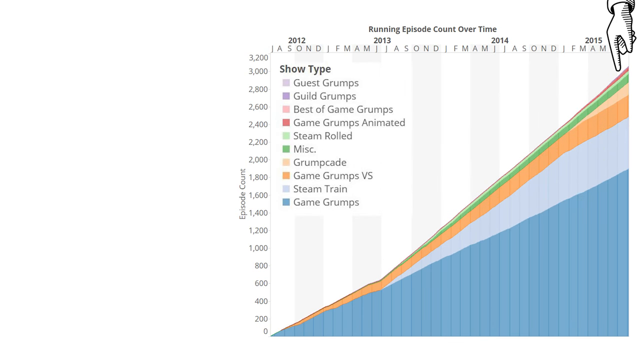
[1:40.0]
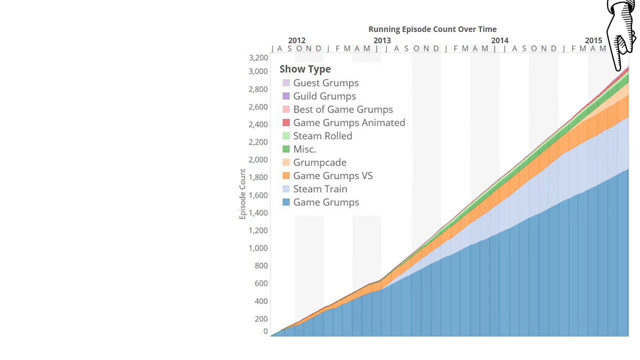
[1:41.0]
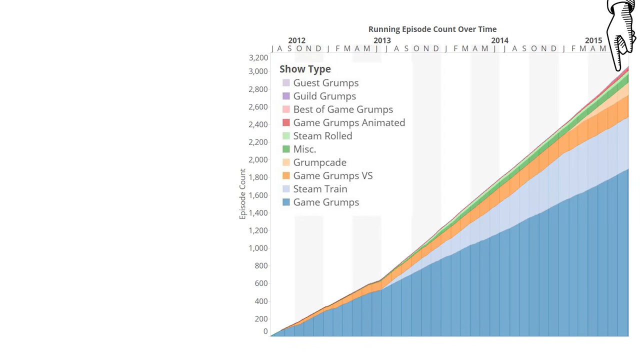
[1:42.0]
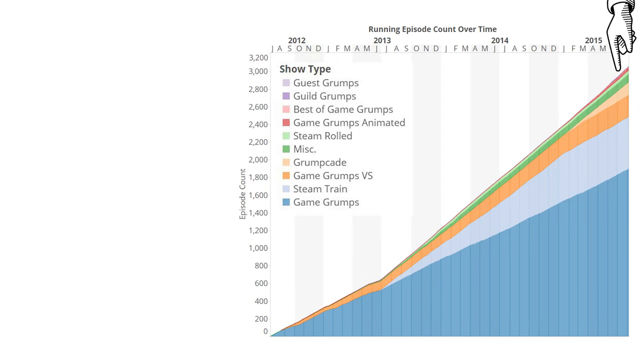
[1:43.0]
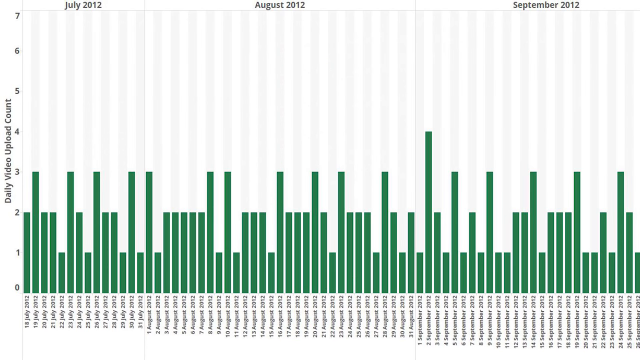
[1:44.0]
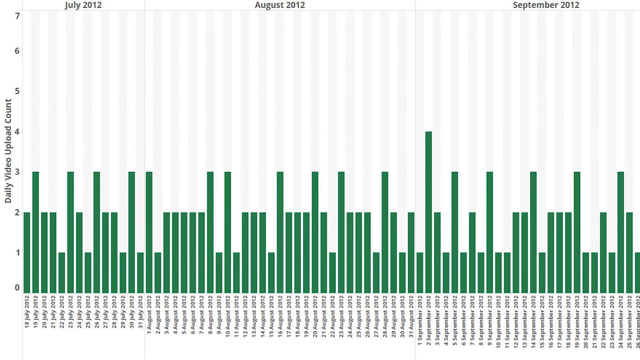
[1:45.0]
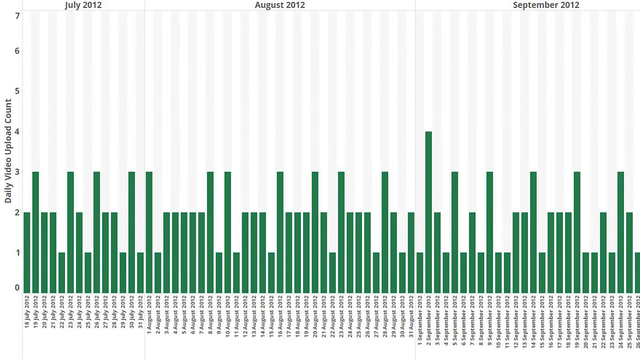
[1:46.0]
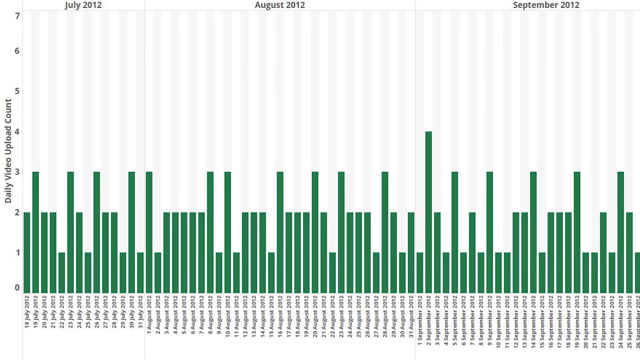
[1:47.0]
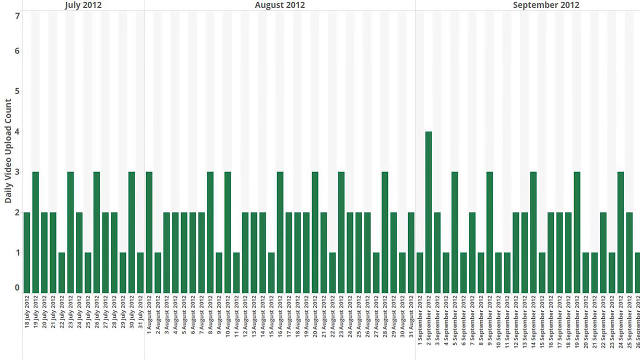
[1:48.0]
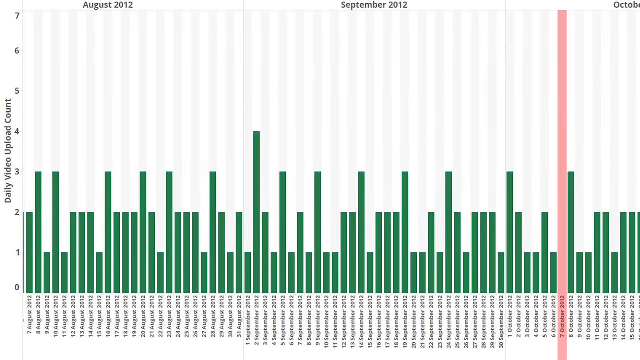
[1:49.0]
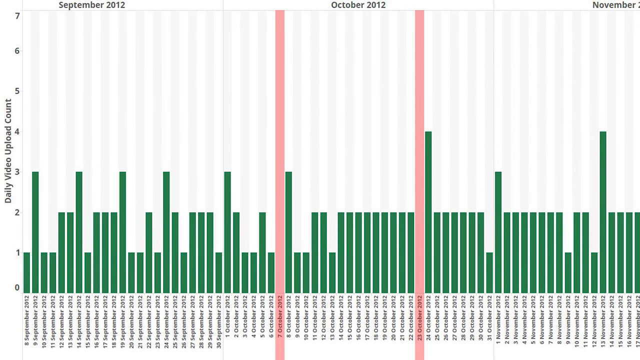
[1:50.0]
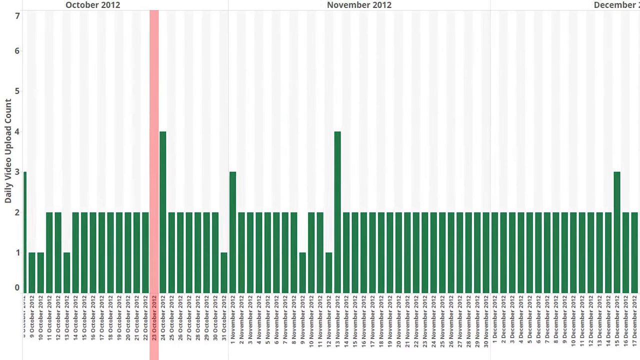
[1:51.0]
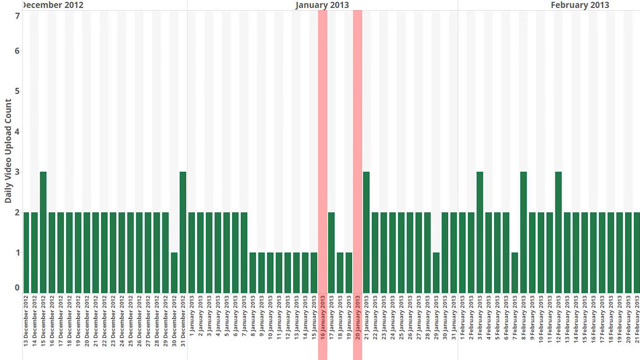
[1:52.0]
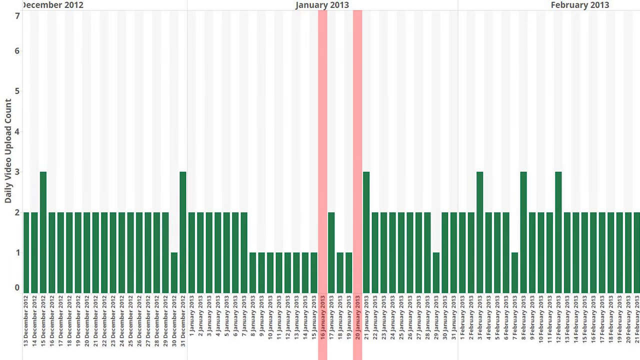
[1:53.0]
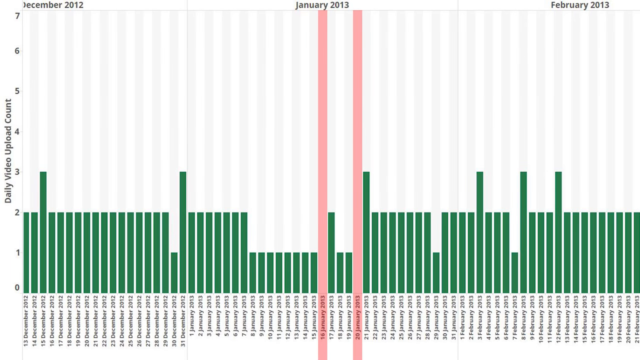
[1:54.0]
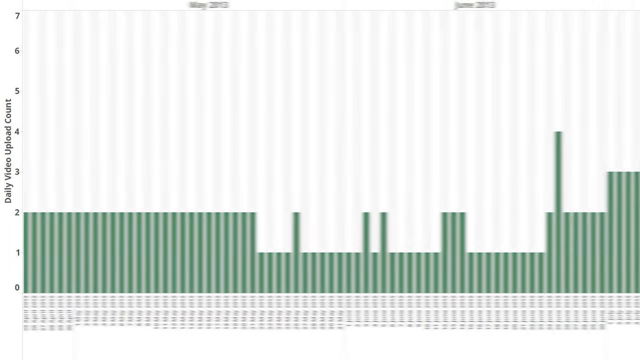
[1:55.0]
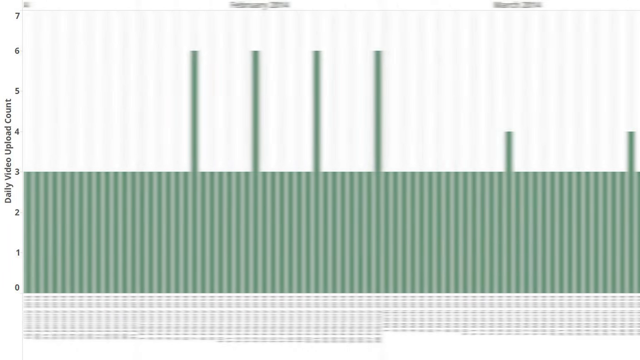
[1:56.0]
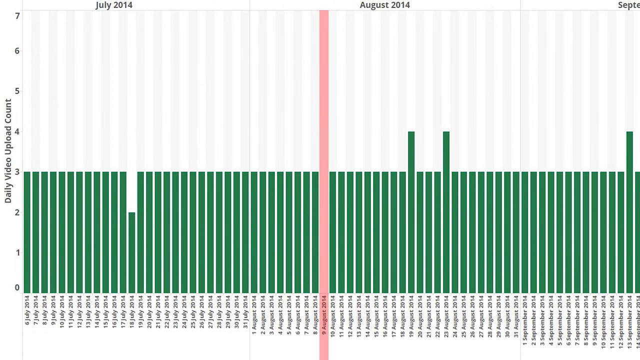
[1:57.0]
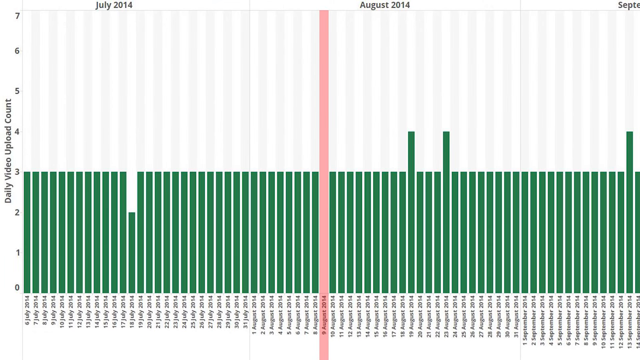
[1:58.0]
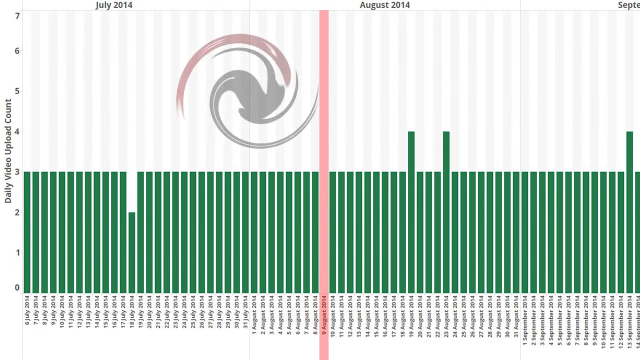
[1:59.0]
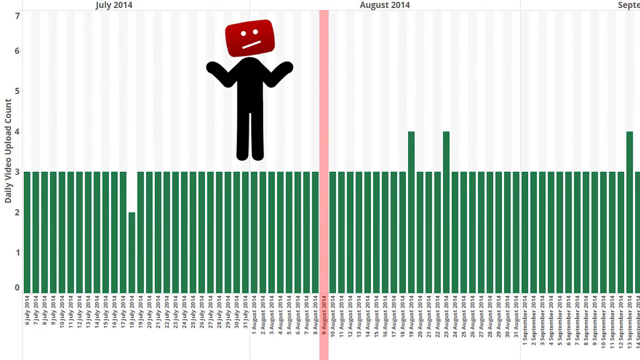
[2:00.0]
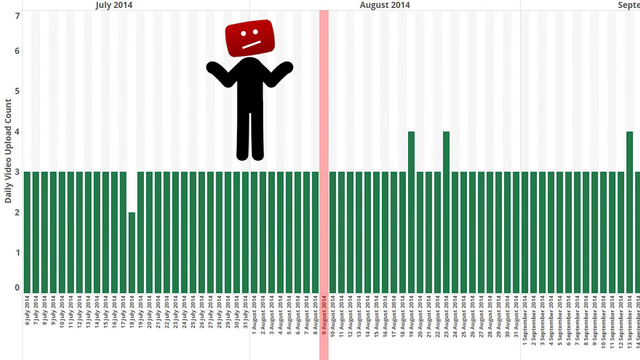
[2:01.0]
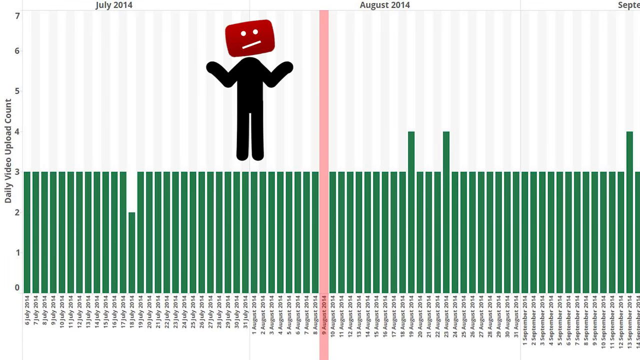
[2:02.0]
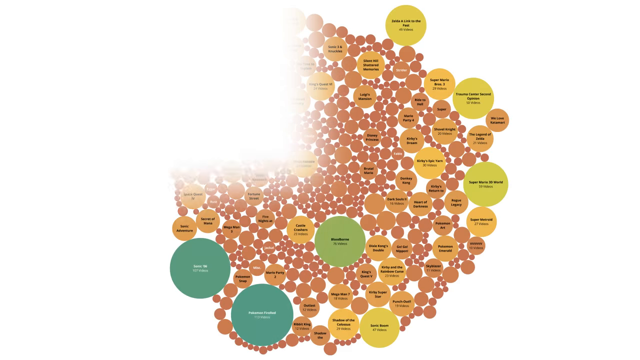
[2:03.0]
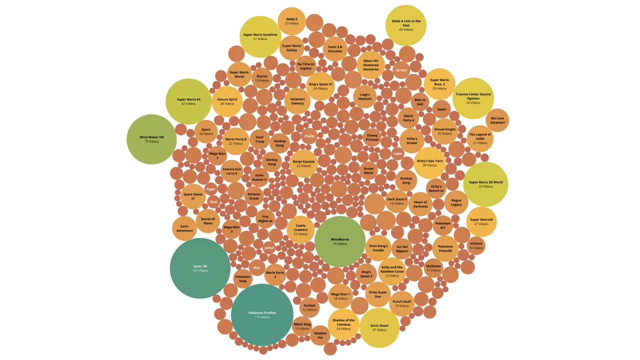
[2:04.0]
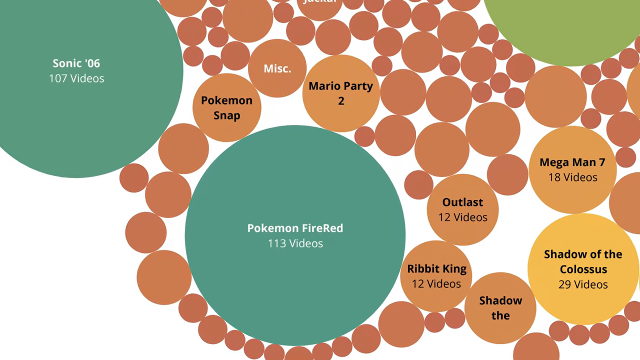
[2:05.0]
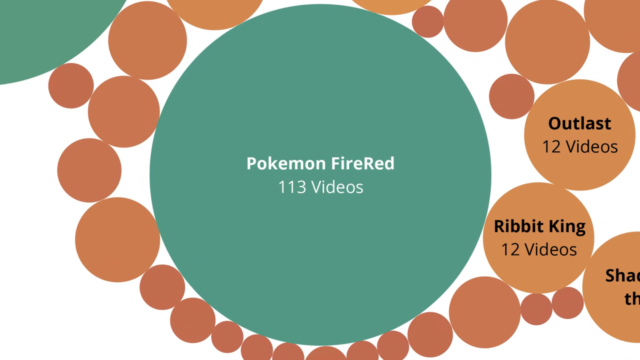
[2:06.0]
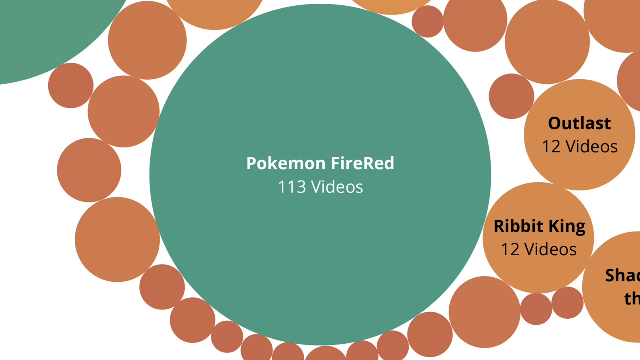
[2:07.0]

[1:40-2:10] A screen shows "running episode count over time," with a scale starting at 0 and rising in steps of 200 to a high of 3,200. The years 2012, 2013, 2014, and 2015 are along the far top. On the far left is what appears to be a Pokemon evolution animation, with white text reading "What? JonTron is evolving" and then "Congratulations. Your JonTron evolved into a Danny Sexbang." A pointing hand with its index finger points at the scale, which has a linear upward shift colored baby blue that then separates into five colors: light baby blue, orange, cream, green, and what appears to be purple. A show type legend lists guest grumps, miscellaneous, game grumps versus, and game grumps.